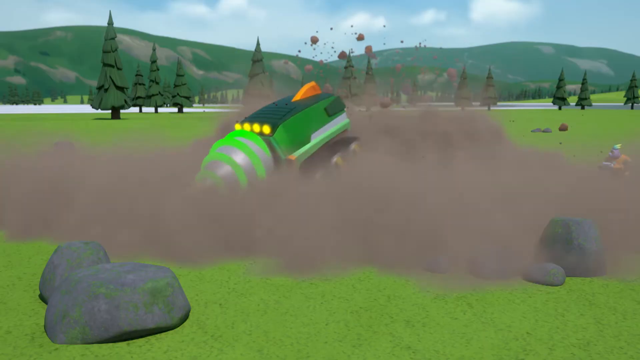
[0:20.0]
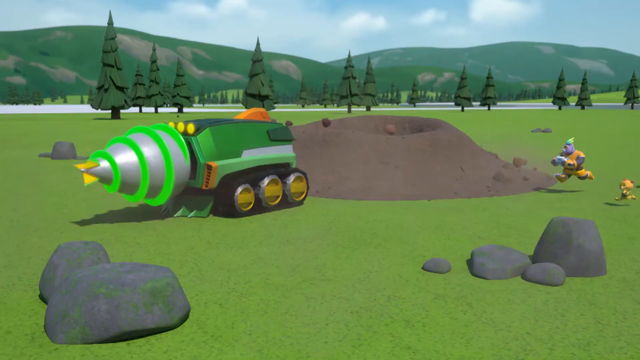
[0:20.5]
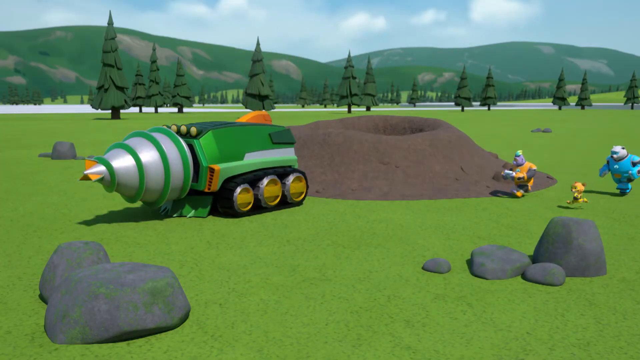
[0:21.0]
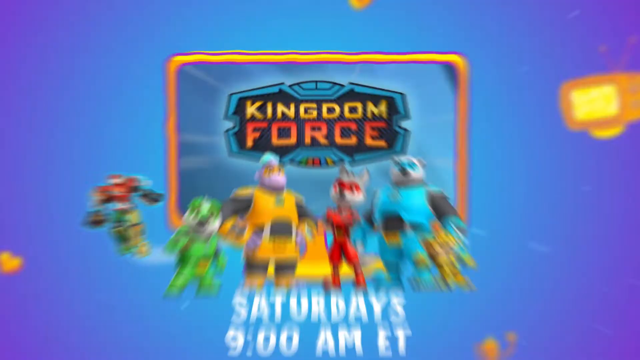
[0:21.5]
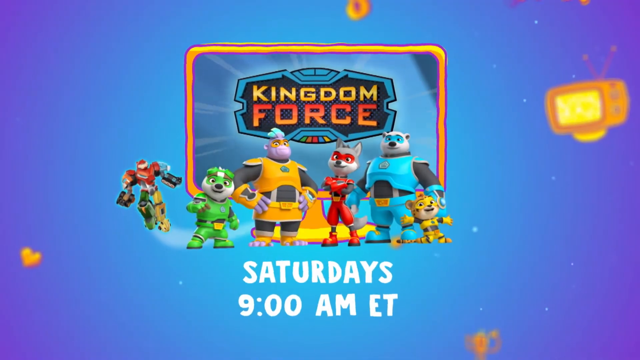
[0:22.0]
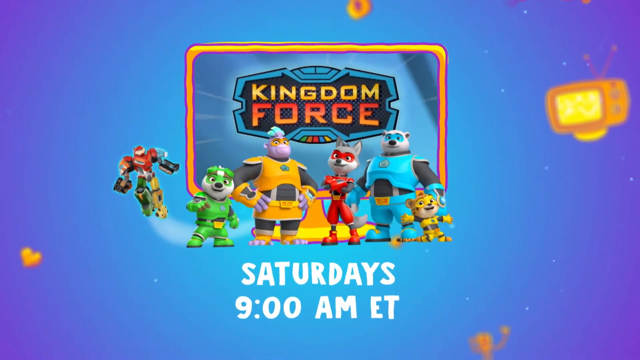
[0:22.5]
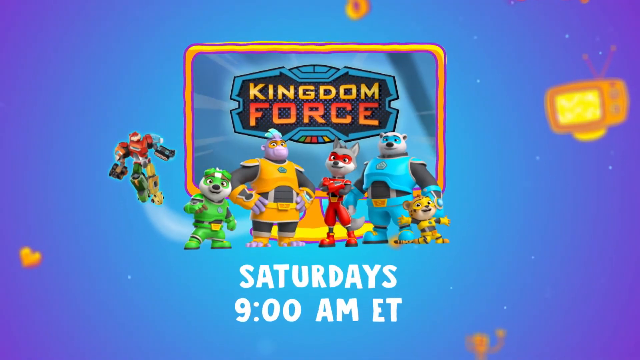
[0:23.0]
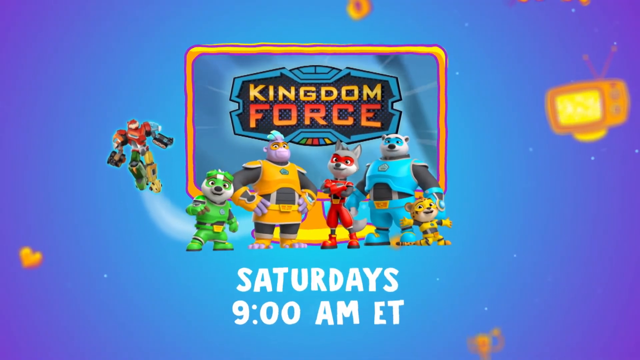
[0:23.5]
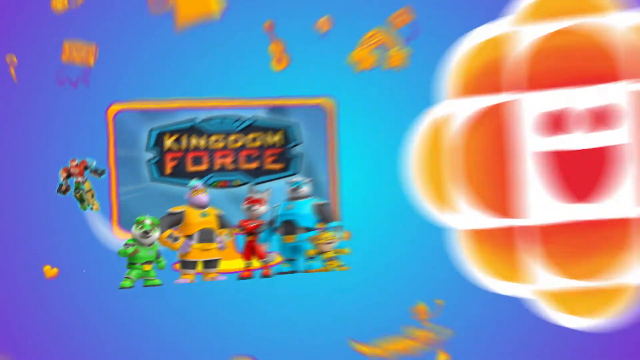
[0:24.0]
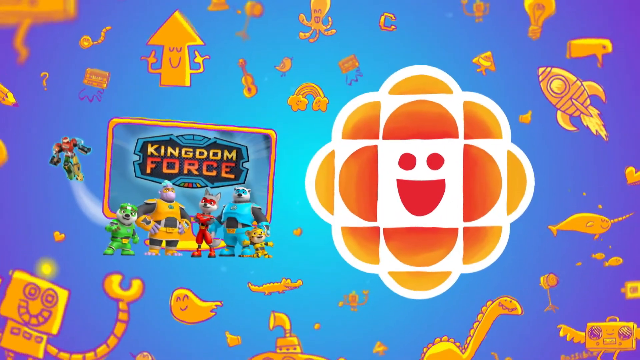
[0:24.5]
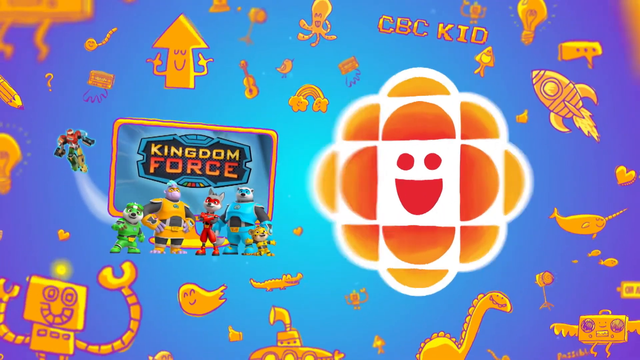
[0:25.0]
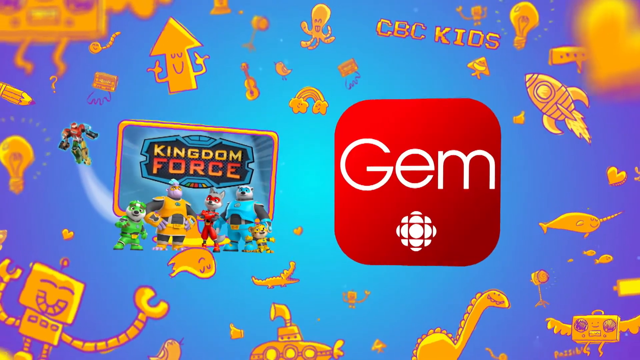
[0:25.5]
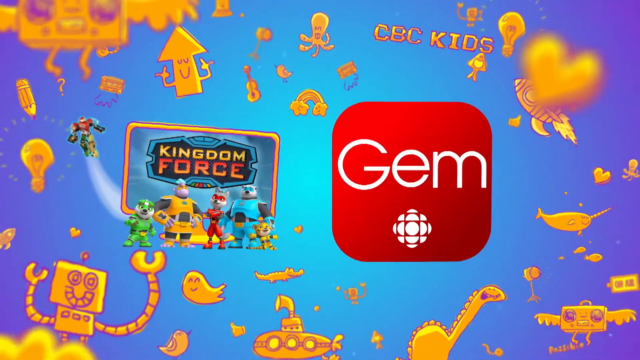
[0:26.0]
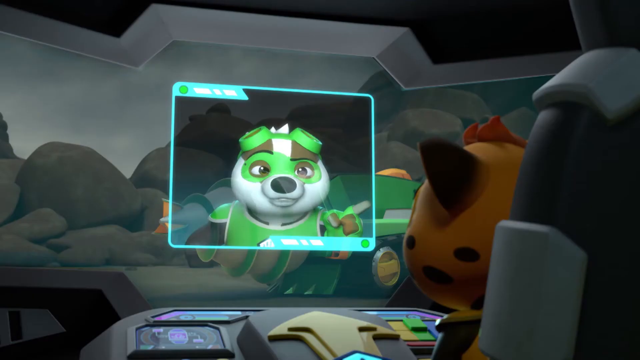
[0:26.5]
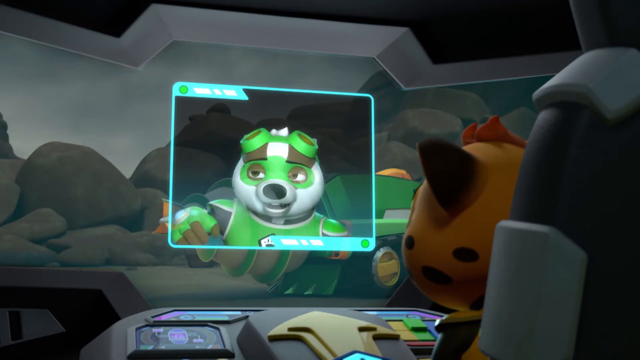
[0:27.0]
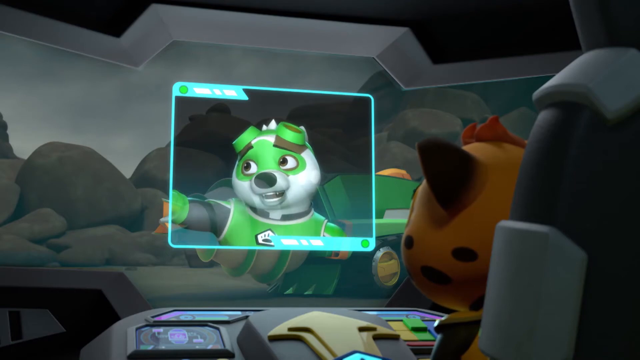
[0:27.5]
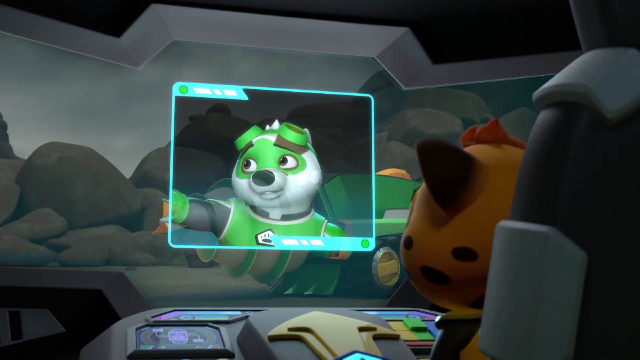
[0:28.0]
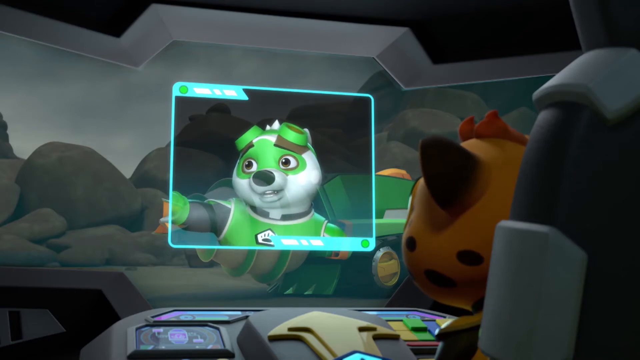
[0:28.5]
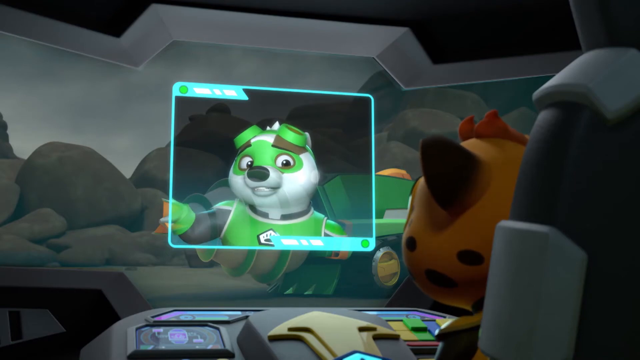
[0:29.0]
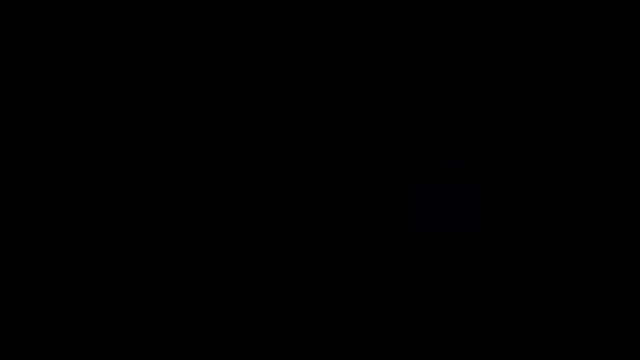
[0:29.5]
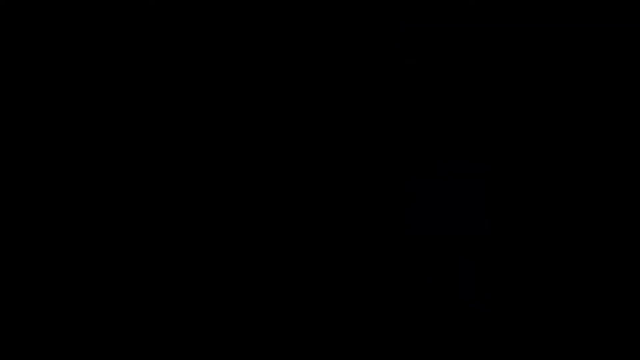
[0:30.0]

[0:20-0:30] The shot begins with "Kingdom Force" and shows all the characters. "GEM" and "cbskids.com" appear, and there also seems to be "Meet TJ." It seems to be a trailer of some sort for upcoming new shows. The machine that can cut through rock appears. The show is called Kingdom Force, airing "Saturdays at 9 a.m." under CBS Kids. The screen is full of color, with multiple designs floating through the air in the sky around the title: a rocket ship, an octopus, an arrow with a face, a pencil, a light bulb, a fish, a crocodile and a heart. The word "GEM" in a red box is also shown.